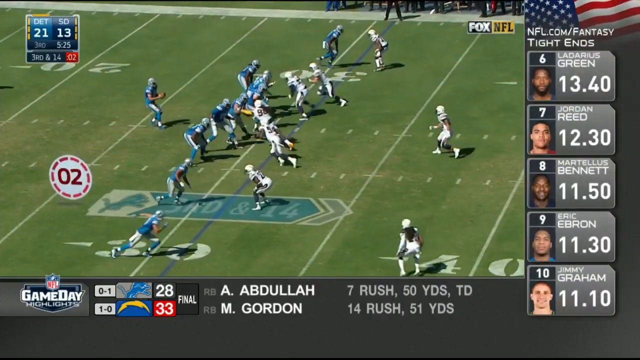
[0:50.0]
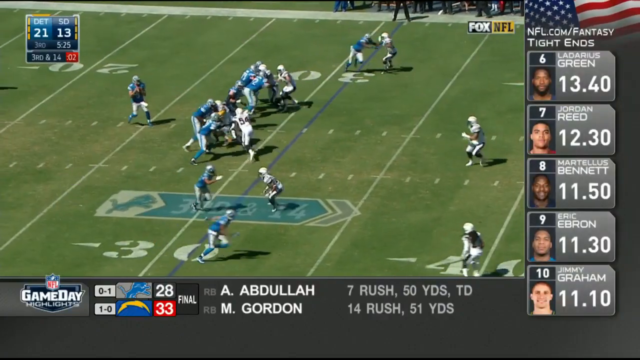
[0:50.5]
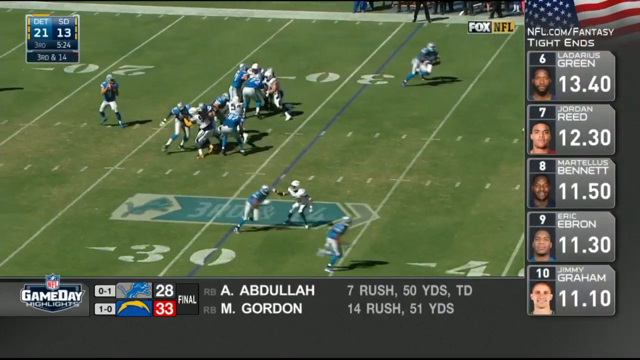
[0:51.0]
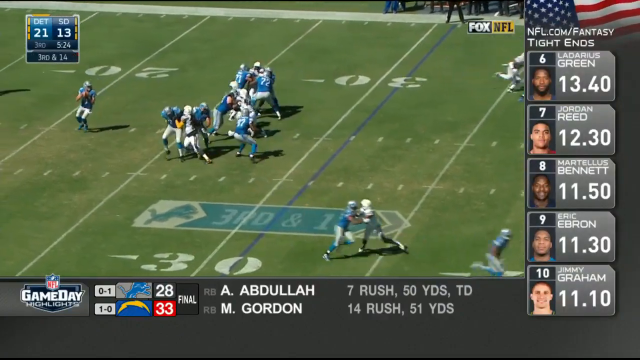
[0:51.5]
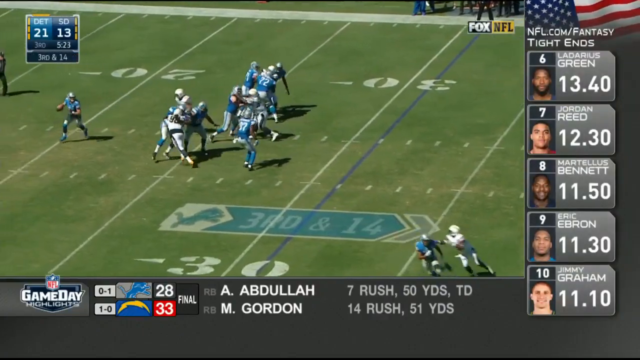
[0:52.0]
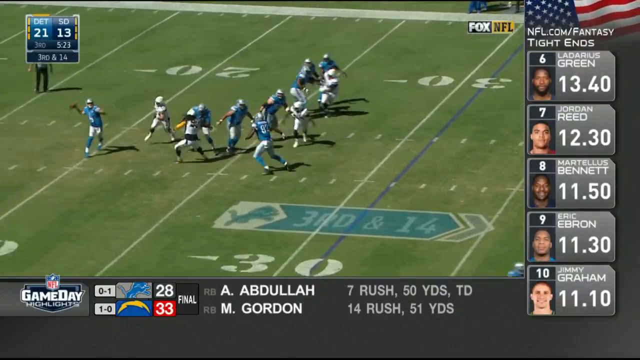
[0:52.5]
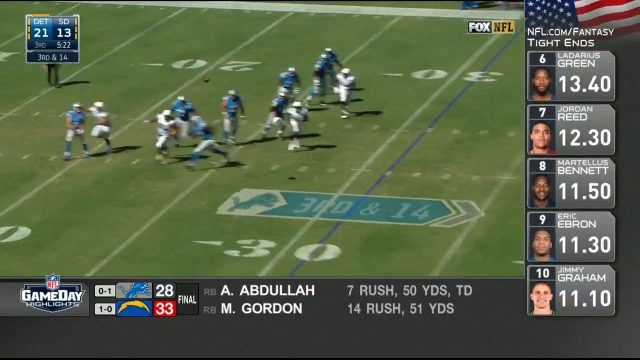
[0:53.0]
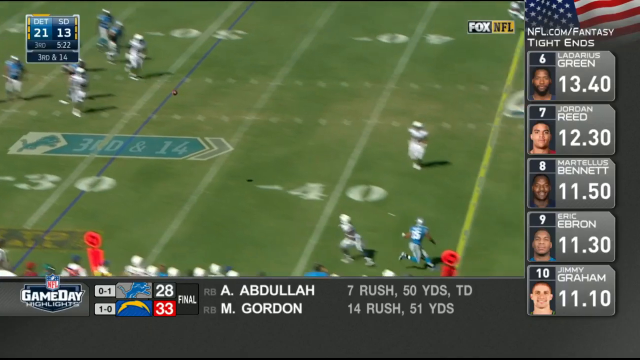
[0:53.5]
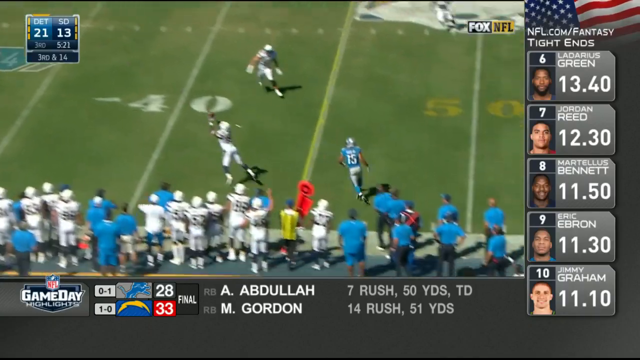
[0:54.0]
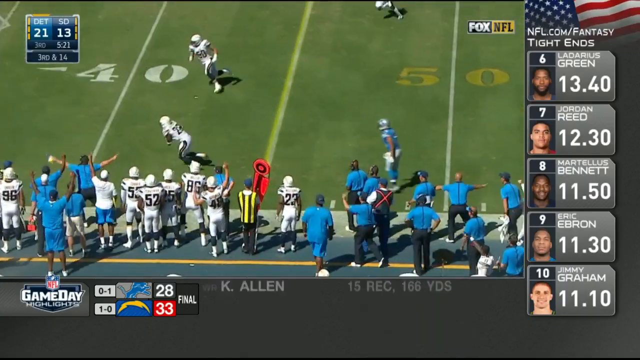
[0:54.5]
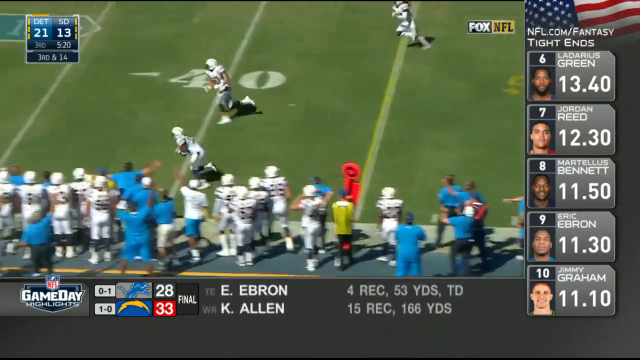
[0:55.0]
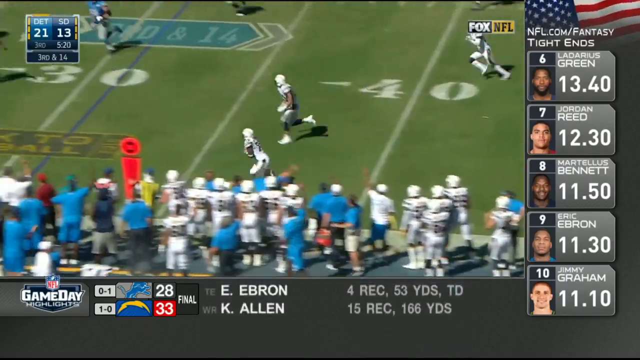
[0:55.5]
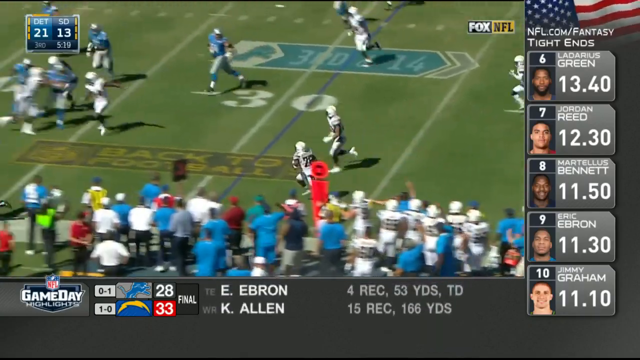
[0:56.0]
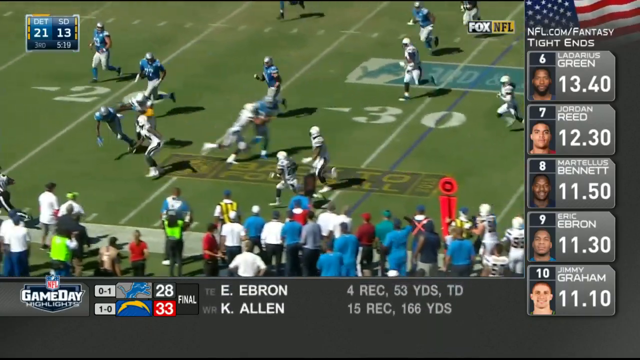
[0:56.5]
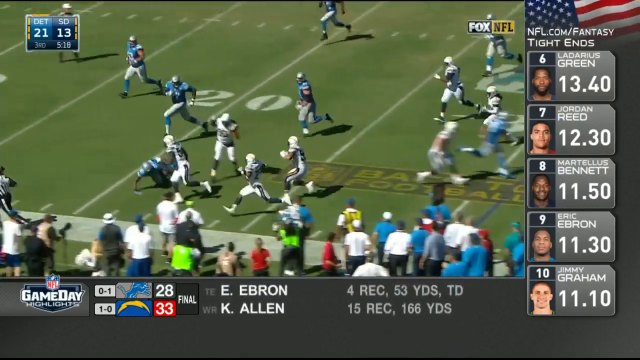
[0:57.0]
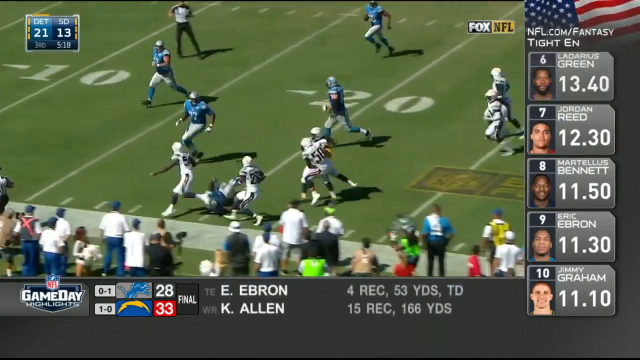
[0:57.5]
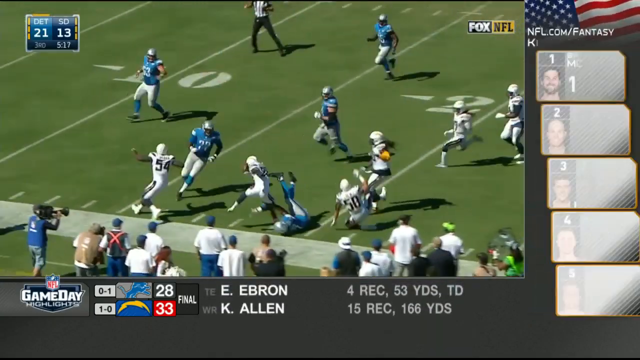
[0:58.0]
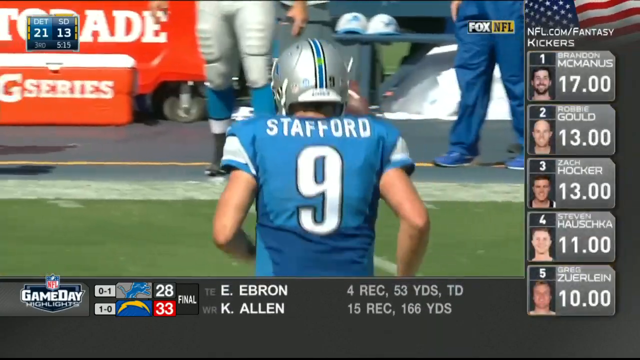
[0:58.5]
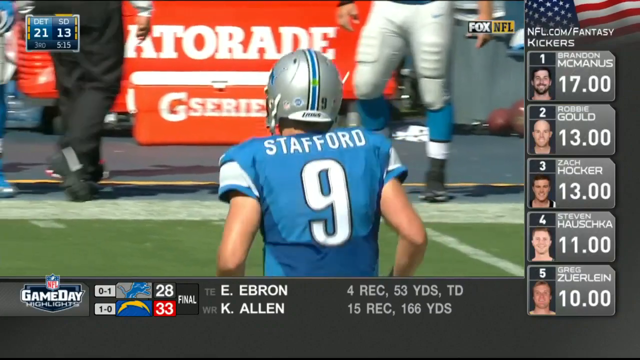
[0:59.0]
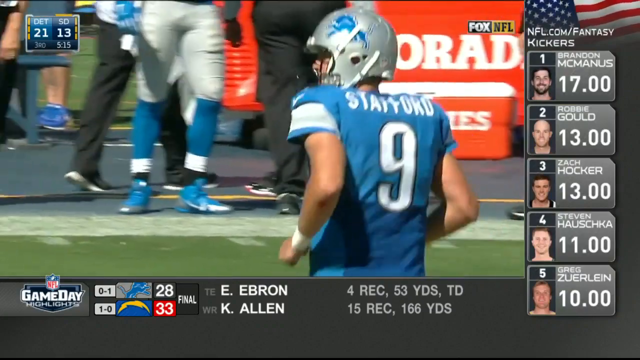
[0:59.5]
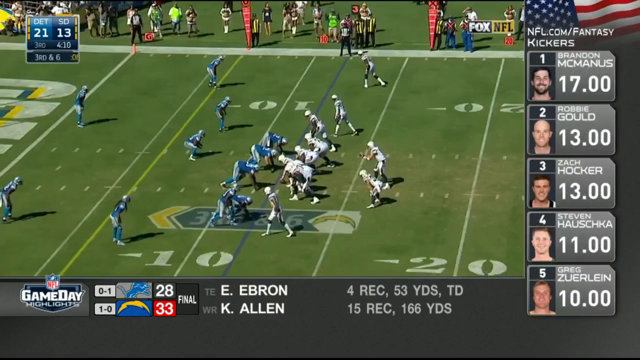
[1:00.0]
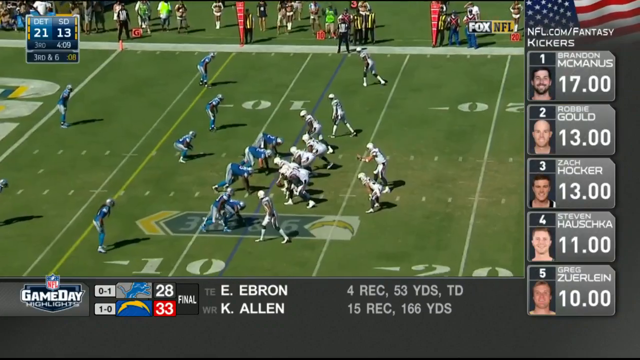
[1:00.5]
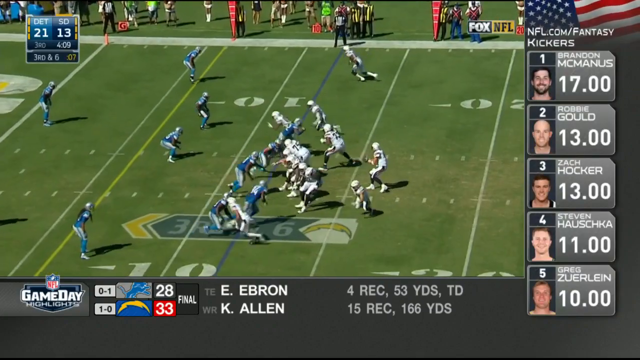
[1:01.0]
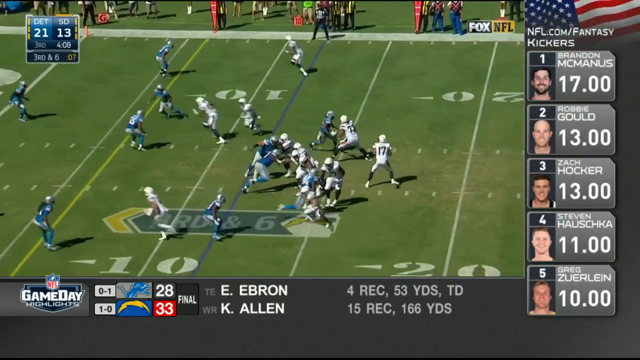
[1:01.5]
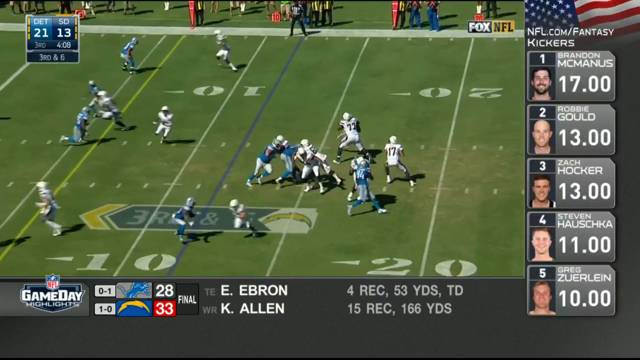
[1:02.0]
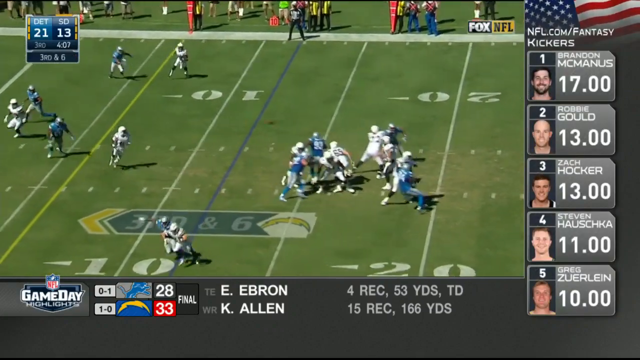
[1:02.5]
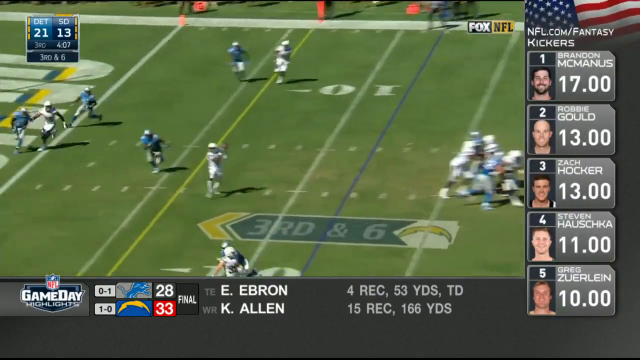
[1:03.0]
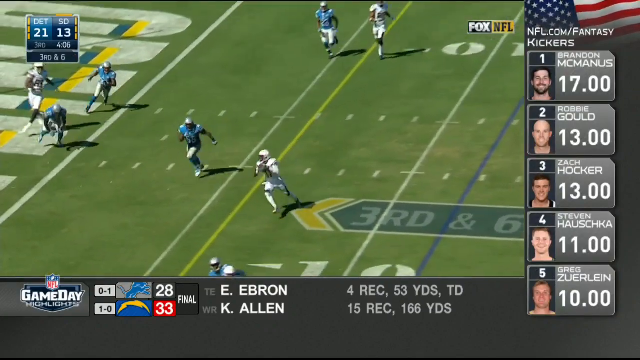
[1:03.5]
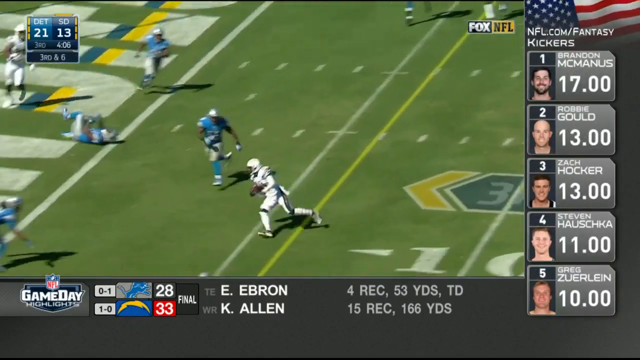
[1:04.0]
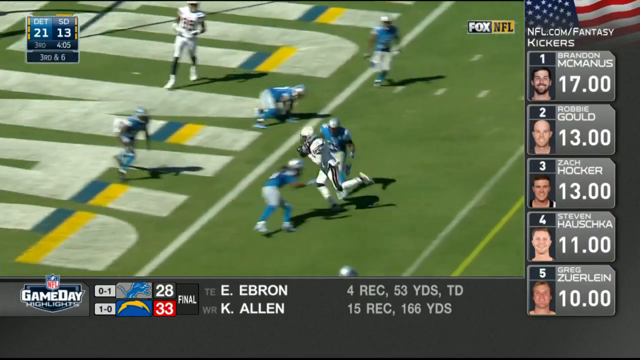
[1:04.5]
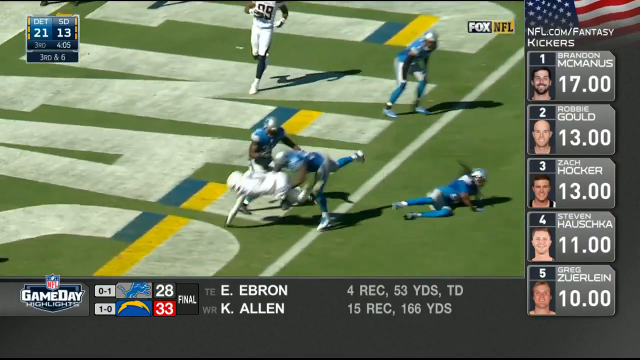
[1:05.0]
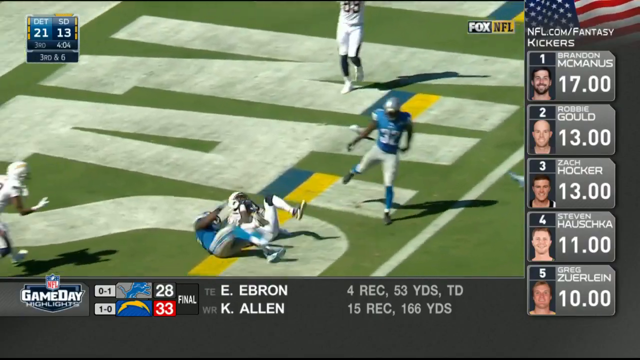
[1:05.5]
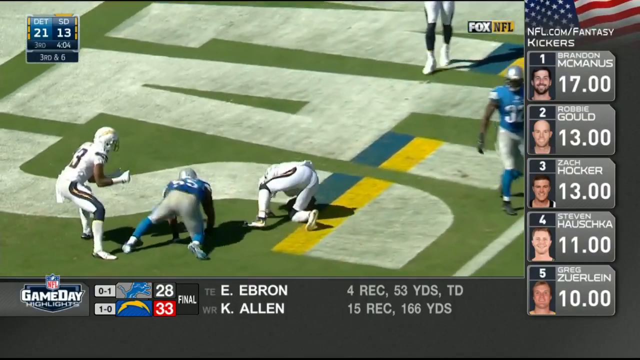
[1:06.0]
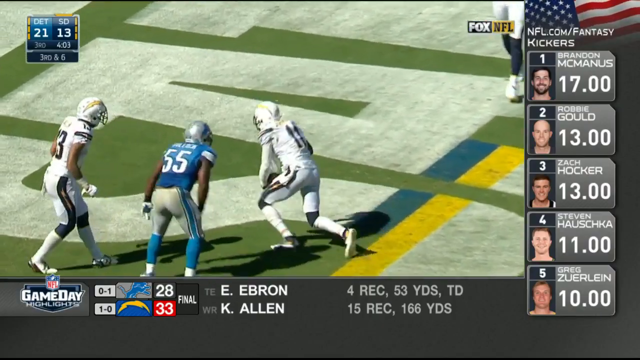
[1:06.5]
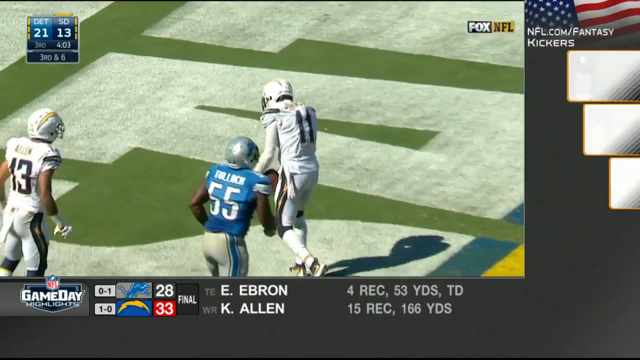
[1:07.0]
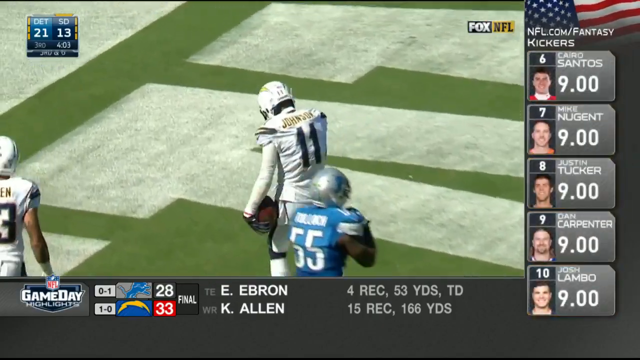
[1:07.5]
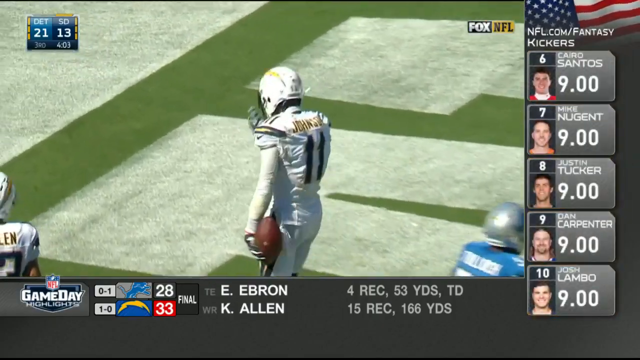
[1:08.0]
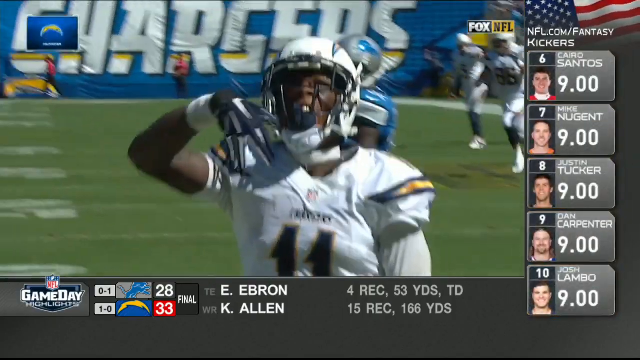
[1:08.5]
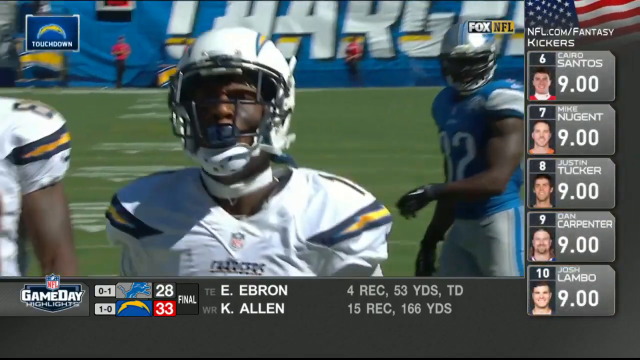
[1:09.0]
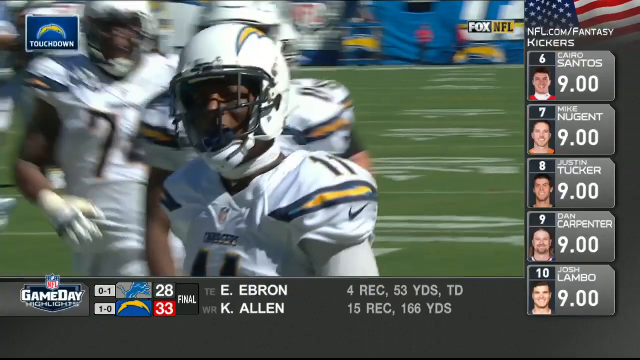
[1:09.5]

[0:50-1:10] The quarterback gets the ball, runs a couple of yards, and throws an interception that almost looks thrown directly to the player in white; a blue player is maybe four or five yards behind him. The player who intercepts runs the opposite way and goes out of bounds at about the 25-yard line. A close-up shows a player in blue, apparently the quarterback, number nine, Stafford, jogging off the field. In a new play the white team is lined up on the right and has the ball. The quarterback gets it and makes a short pass to a player who runs into the end zone for a touchdown: number 11 on the white team. He stands up, sort of pats his chest, then turns to the crowd and gestures with his hand in celebration while holding the ball, yelling and talking, with other players behind him. The score still shows 28 to 33.